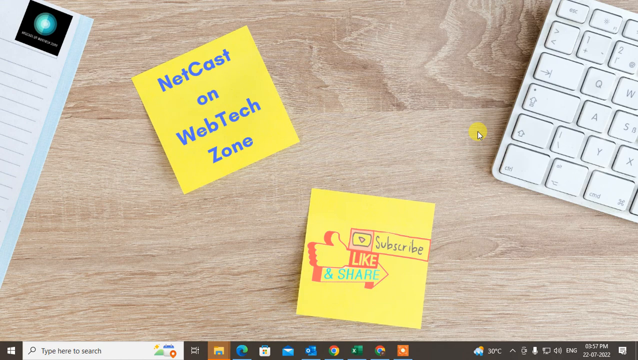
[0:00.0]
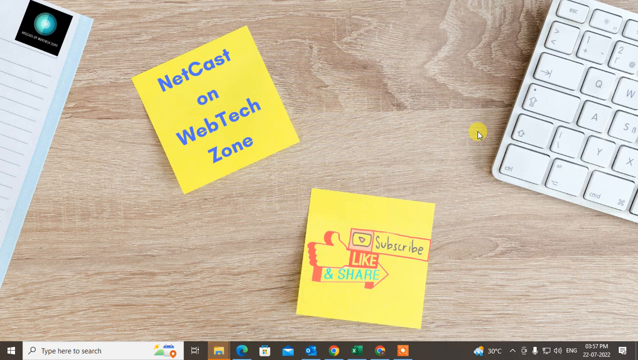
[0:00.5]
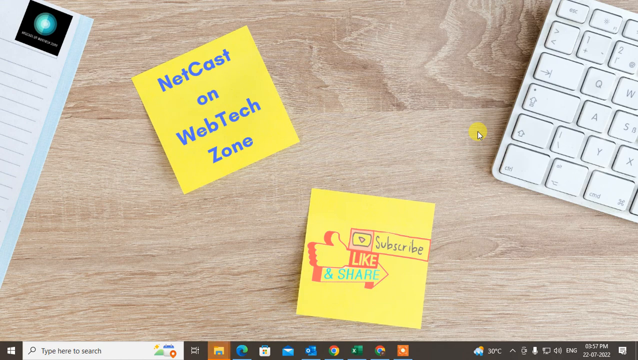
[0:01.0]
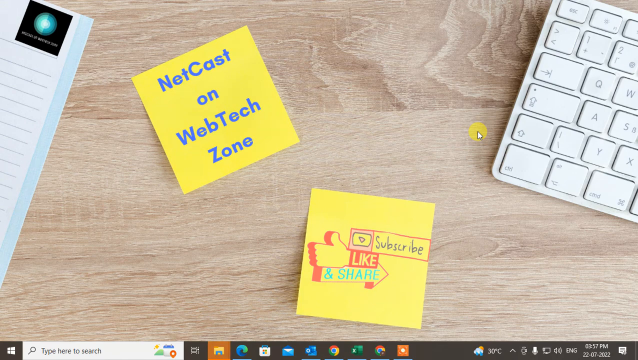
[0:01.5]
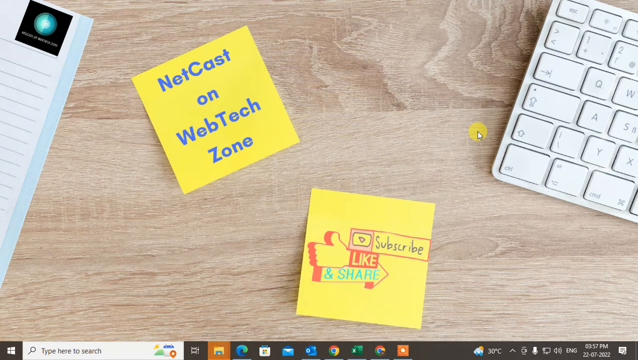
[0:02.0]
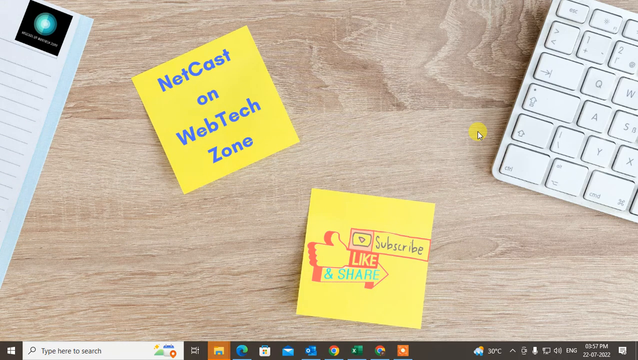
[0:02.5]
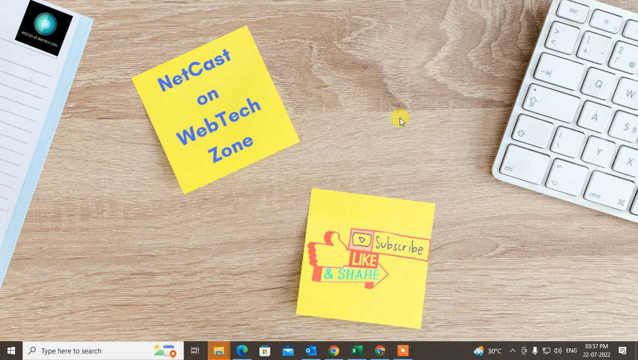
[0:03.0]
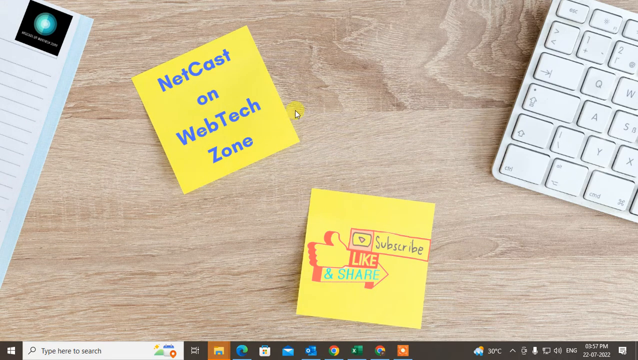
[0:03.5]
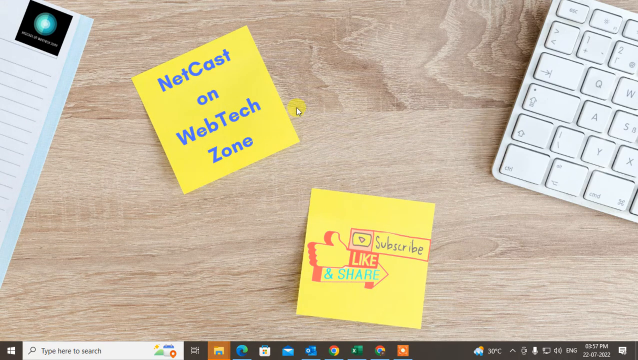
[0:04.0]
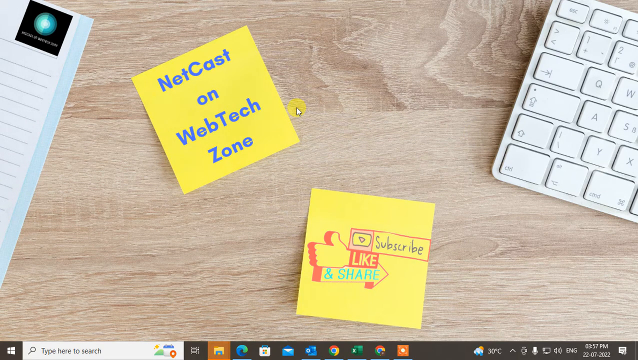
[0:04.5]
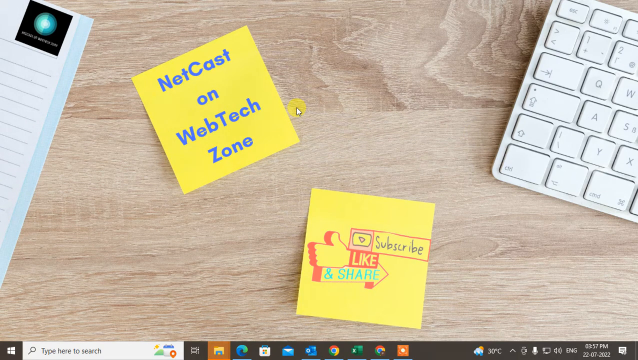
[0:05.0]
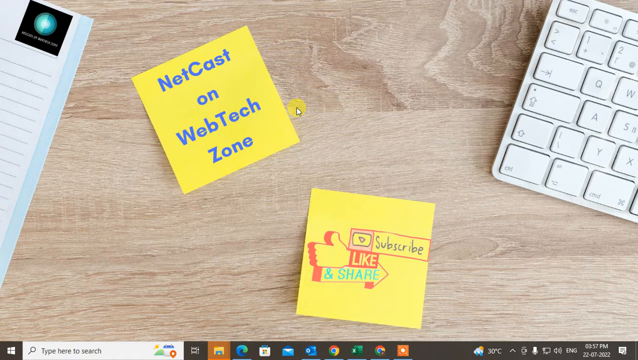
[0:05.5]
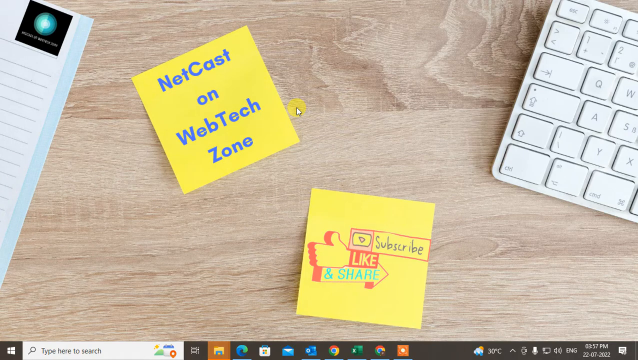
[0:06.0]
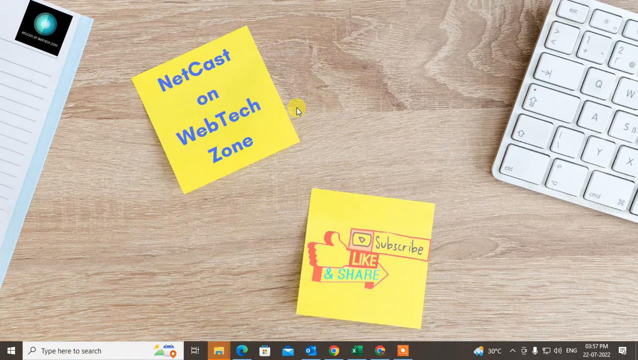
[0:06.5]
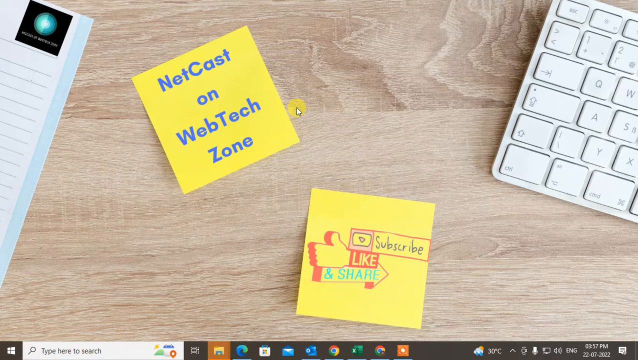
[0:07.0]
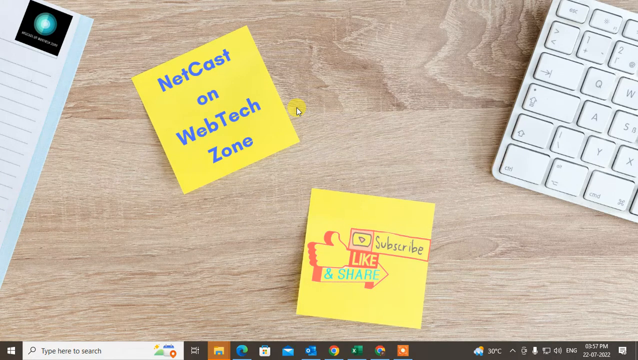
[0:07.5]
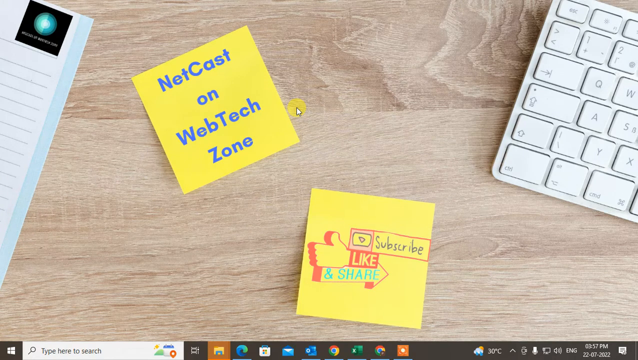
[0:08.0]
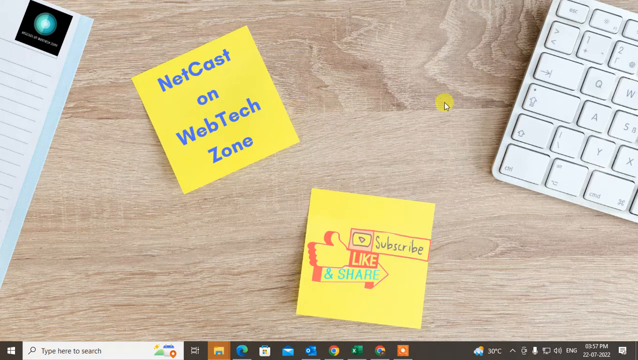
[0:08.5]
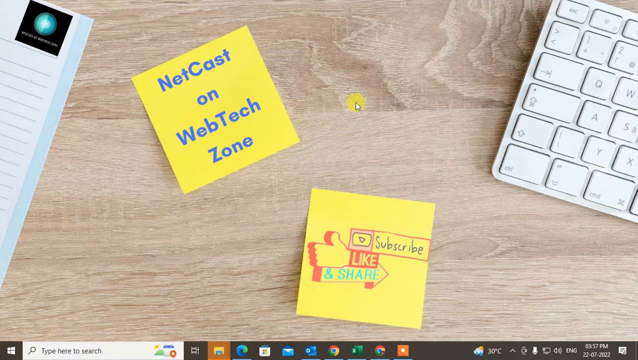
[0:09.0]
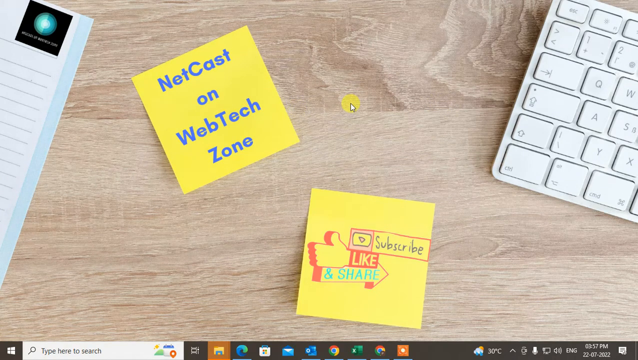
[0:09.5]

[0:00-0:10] A computer screen displays what appears to be a video image, with a mouse cursor hovering that has a yellow highlighting dot. The background looks like wood planks. There are two yellow Post-its, one brighter than the other. On the bright one, blue letters read "netcast on web tech zone." The muted yellow one looks more like someone actually doodled on it; it has a subscribe with a thumbs up, like, and share logo. On the right side is a corner of a white keyboard, and on the left side is a corner of some lined paper that looks like it is on some type of notebook, since a blue edging is visible. In the upper right corner is a black logo with a blue dot and a white center that looks sort of like the earth, with different shades of blue, and there is some wording right below it.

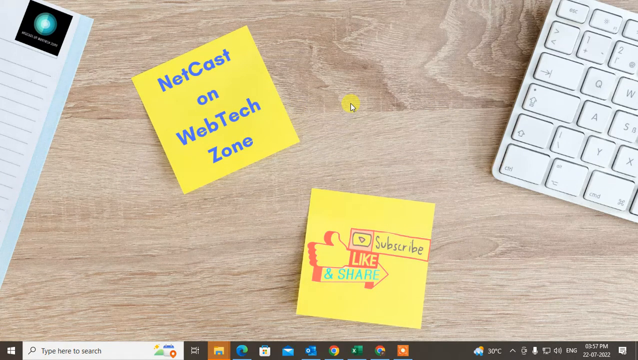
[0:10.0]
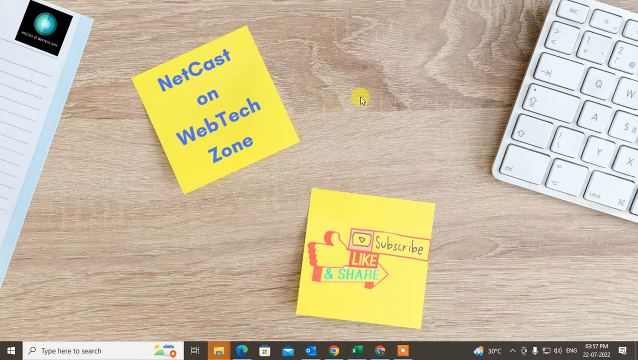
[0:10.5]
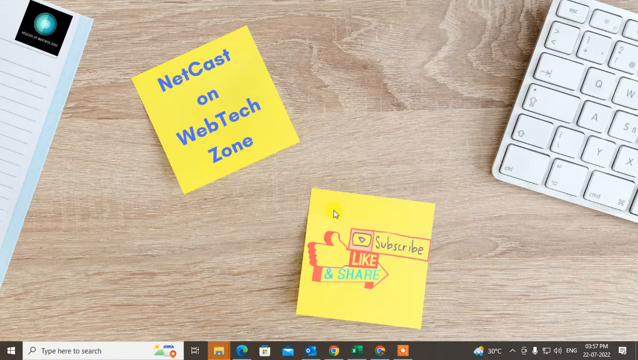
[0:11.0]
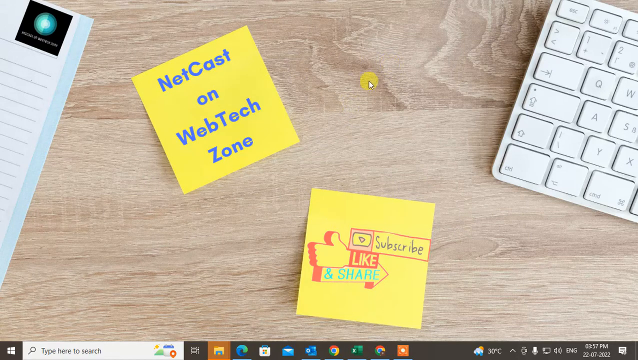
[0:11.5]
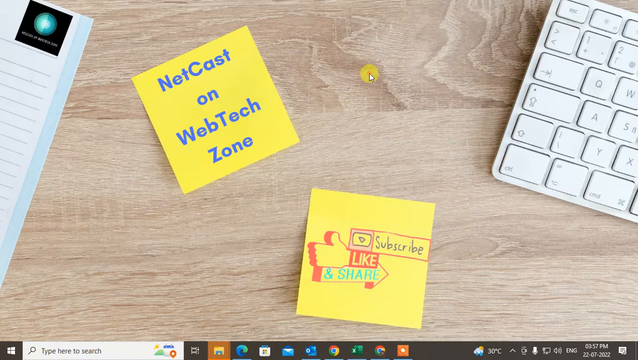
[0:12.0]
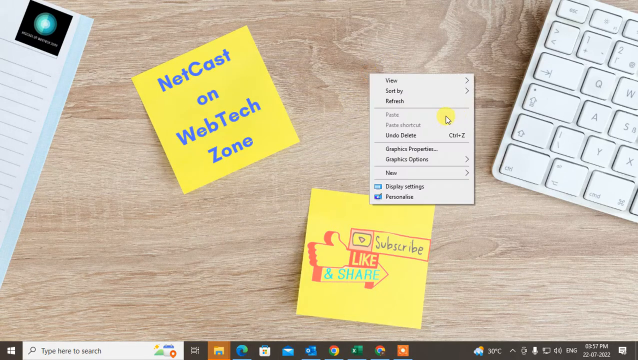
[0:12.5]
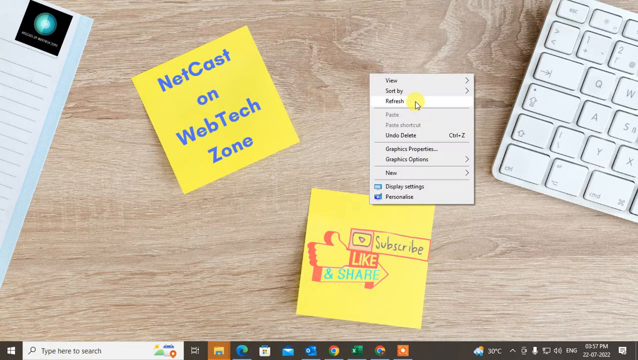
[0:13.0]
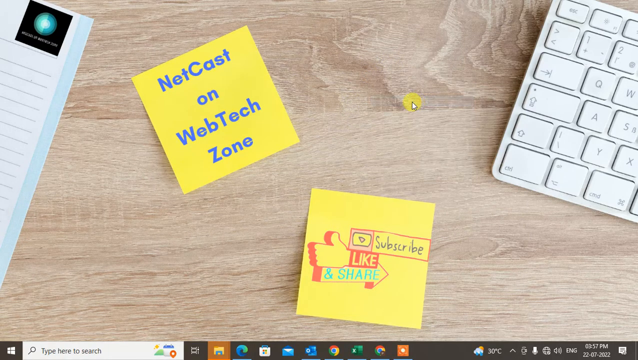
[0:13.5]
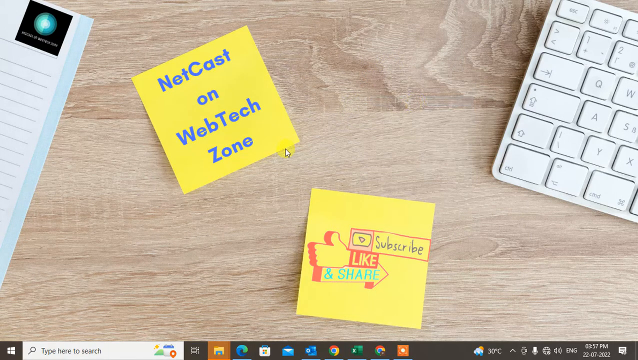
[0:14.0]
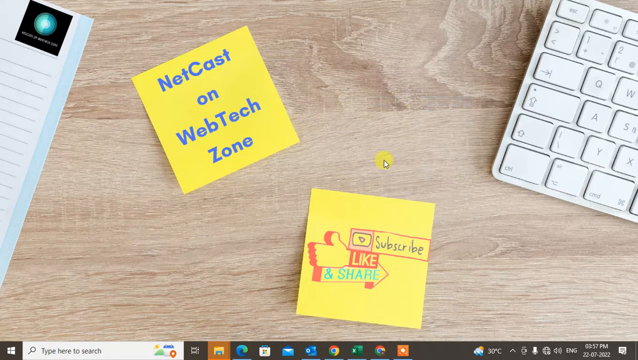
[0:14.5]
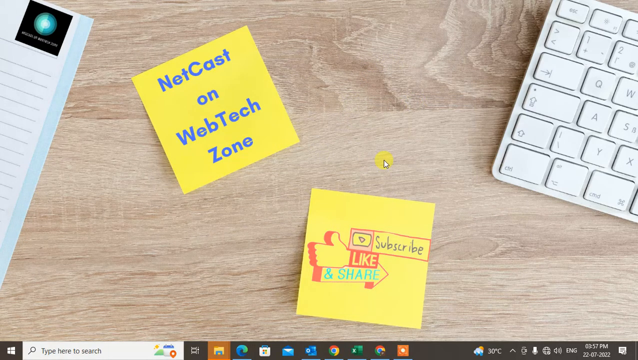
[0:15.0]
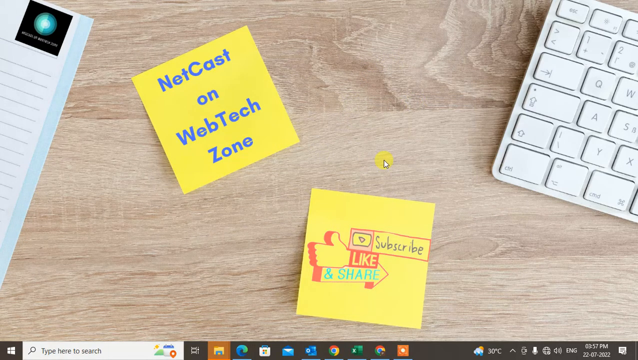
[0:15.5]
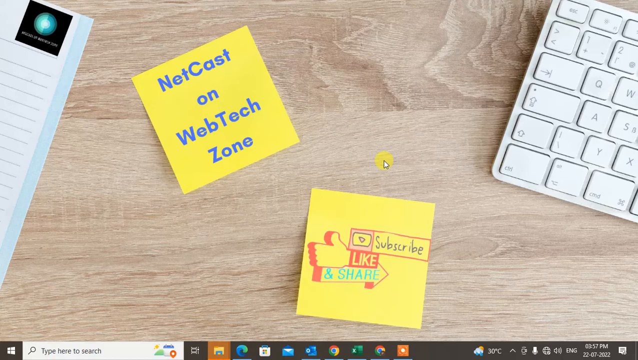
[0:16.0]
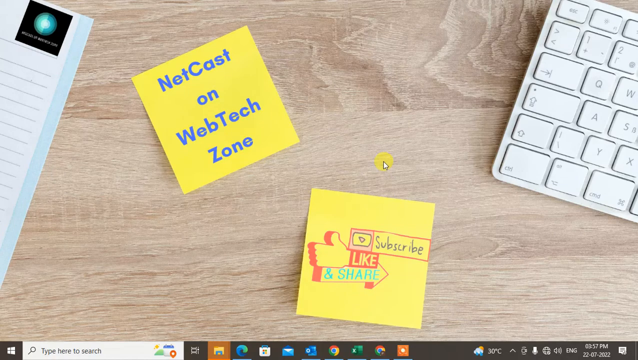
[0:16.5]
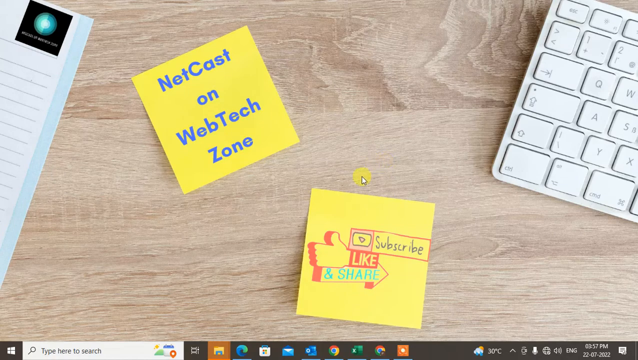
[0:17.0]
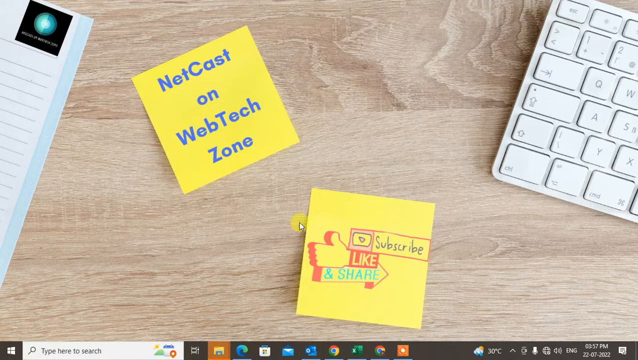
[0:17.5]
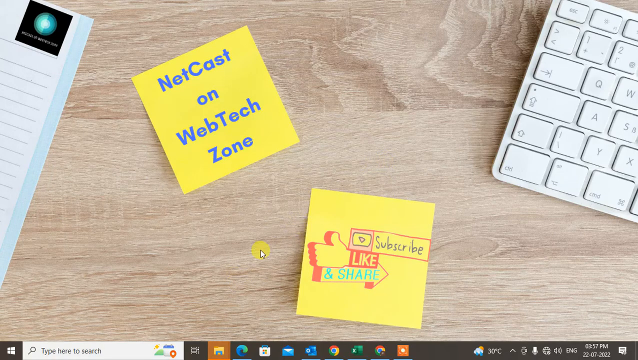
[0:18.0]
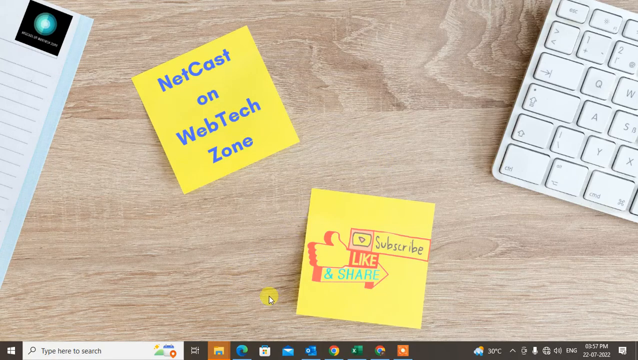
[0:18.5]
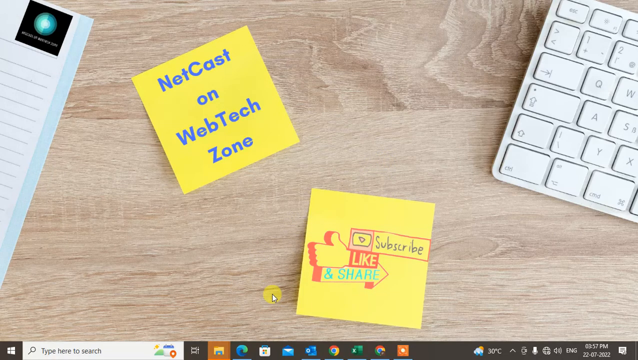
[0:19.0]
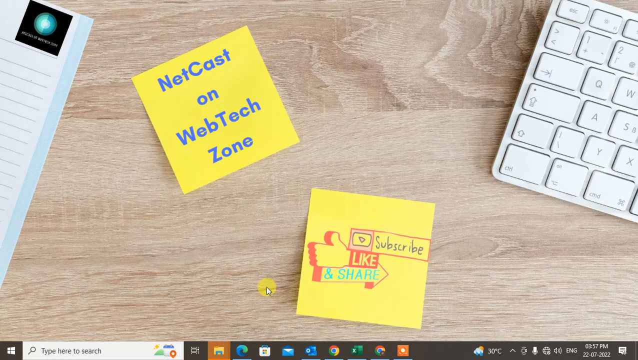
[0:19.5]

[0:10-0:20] The mouse cursor does a right click, a pop-up window opens, and refresh is clicked; it happens very quickly. A moment later the screen goes to an Outlook email account, where several window panes are open giving a preview of email subjects and content. There are no additional captions or descriptions on screen explaining the purpose.